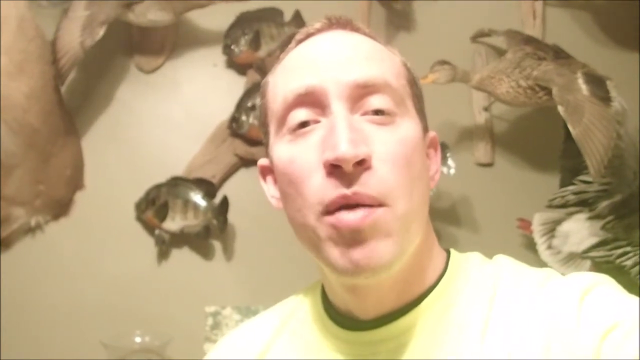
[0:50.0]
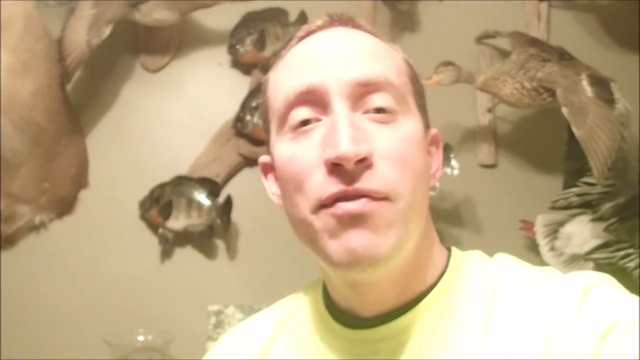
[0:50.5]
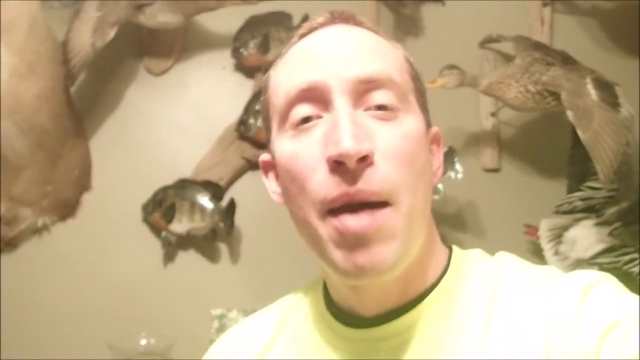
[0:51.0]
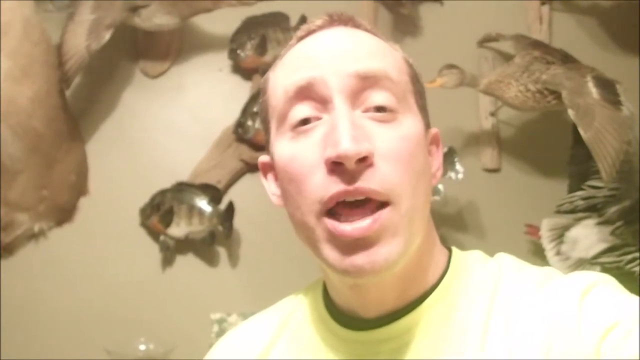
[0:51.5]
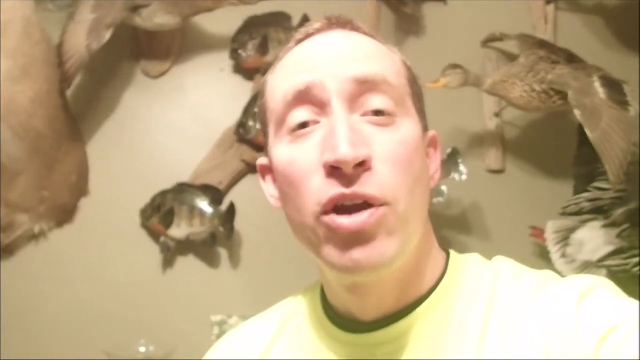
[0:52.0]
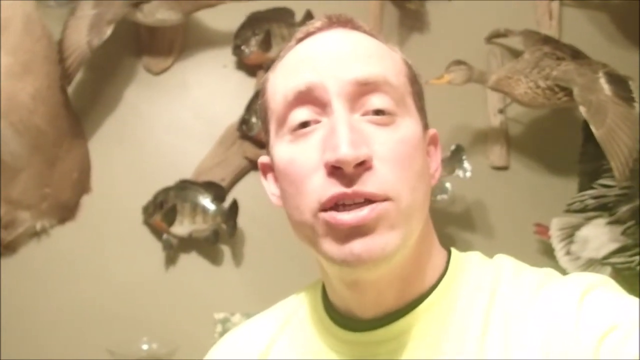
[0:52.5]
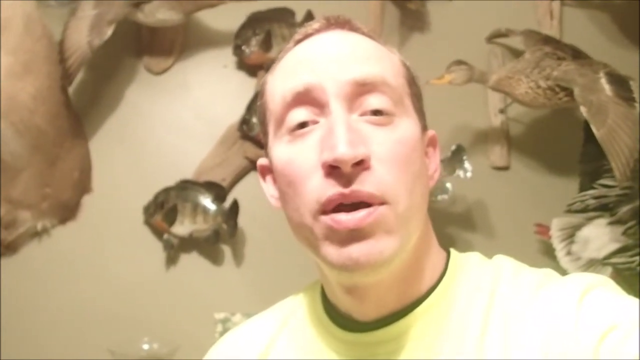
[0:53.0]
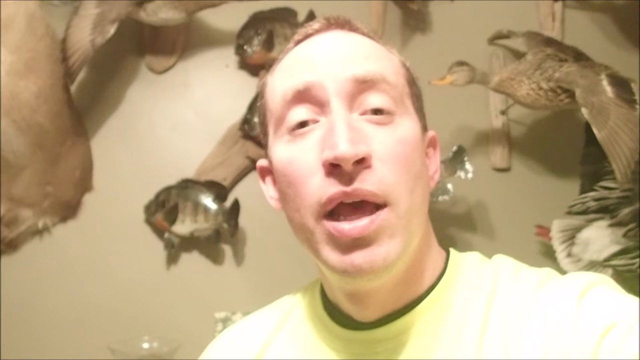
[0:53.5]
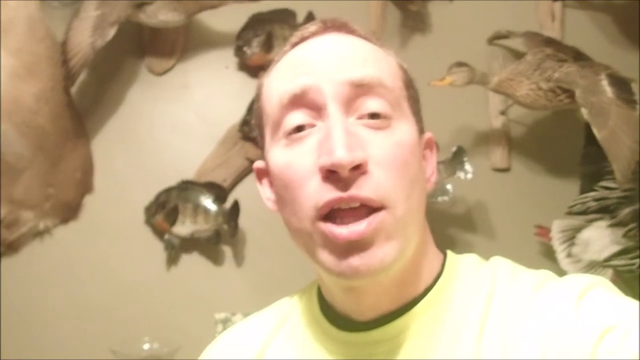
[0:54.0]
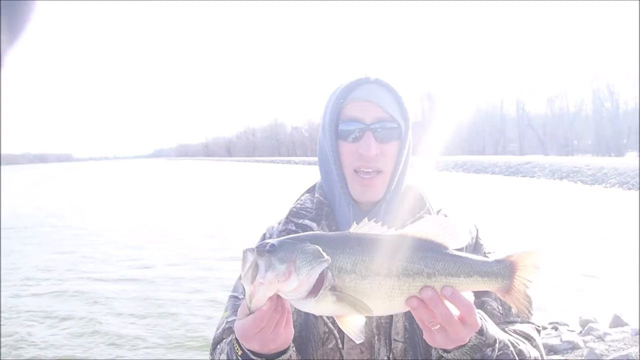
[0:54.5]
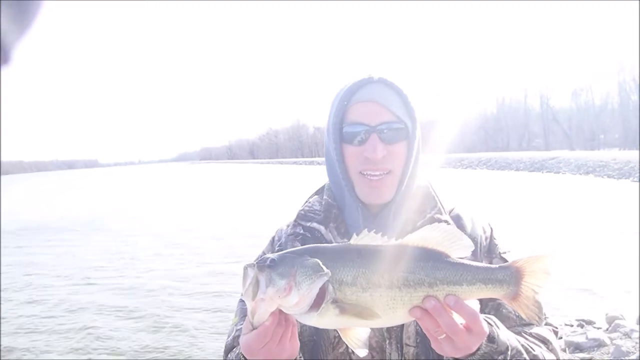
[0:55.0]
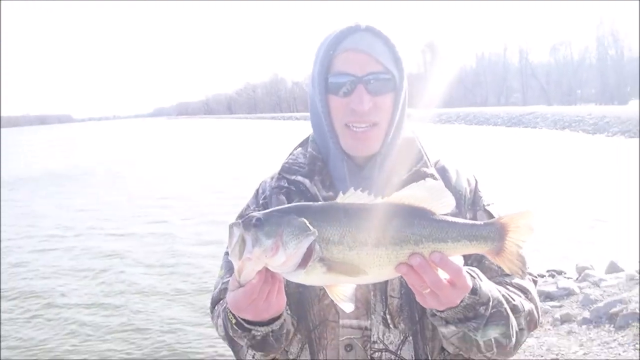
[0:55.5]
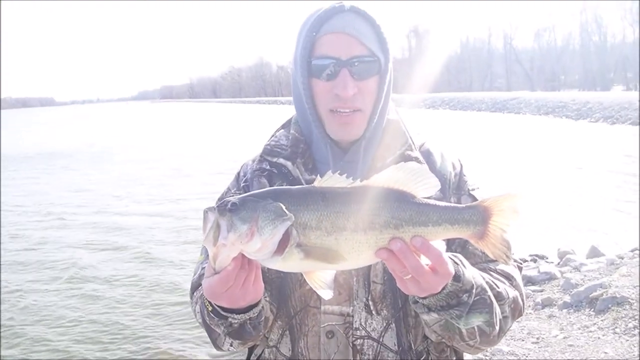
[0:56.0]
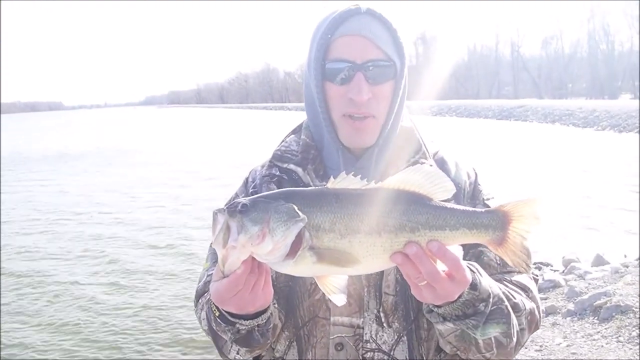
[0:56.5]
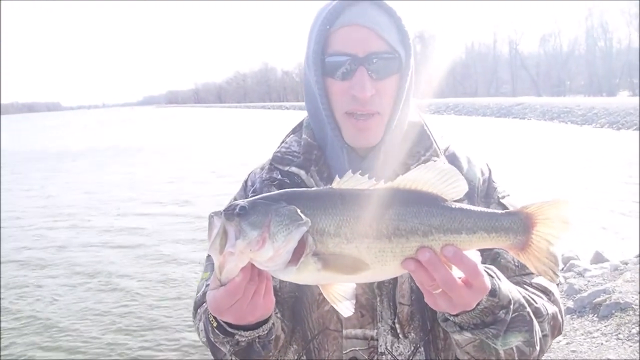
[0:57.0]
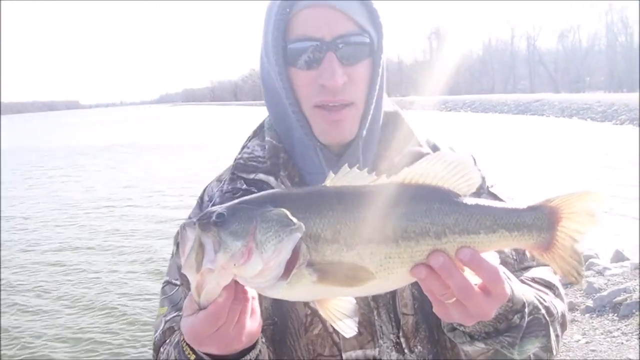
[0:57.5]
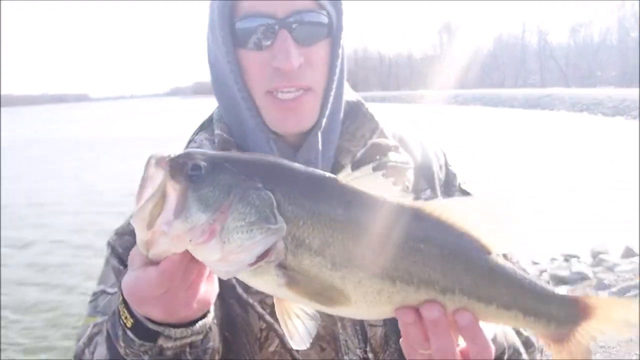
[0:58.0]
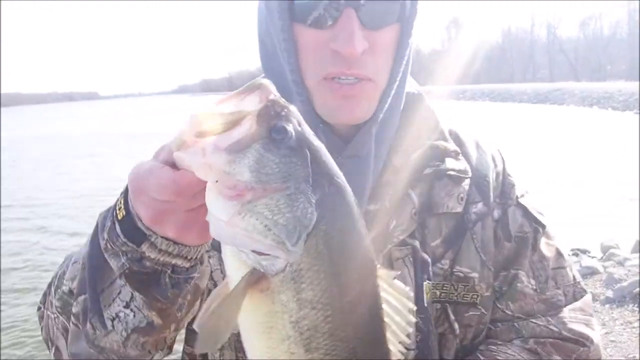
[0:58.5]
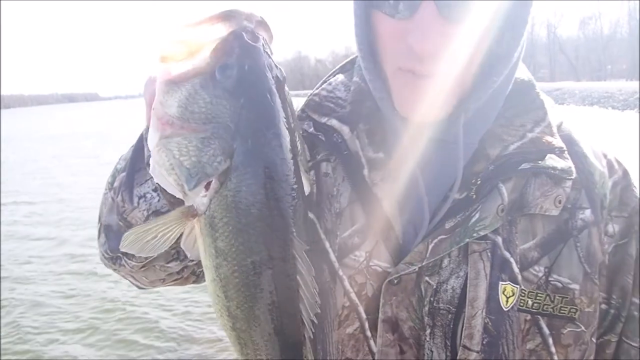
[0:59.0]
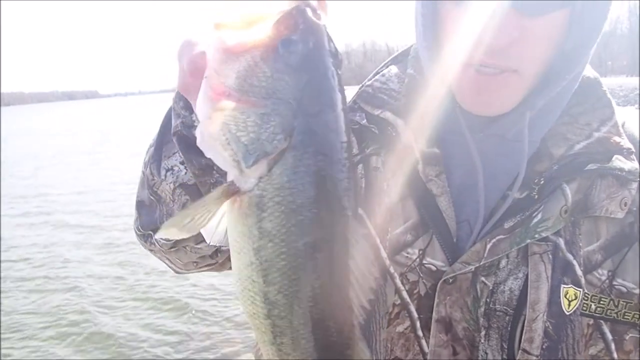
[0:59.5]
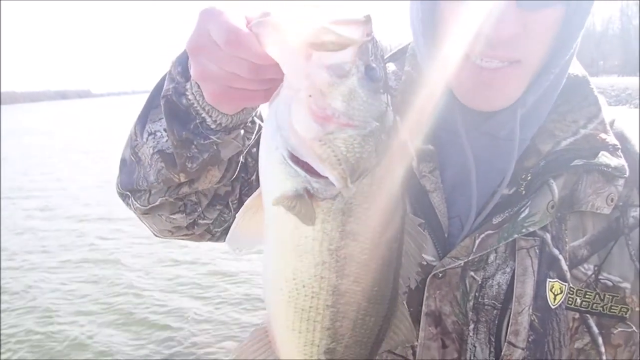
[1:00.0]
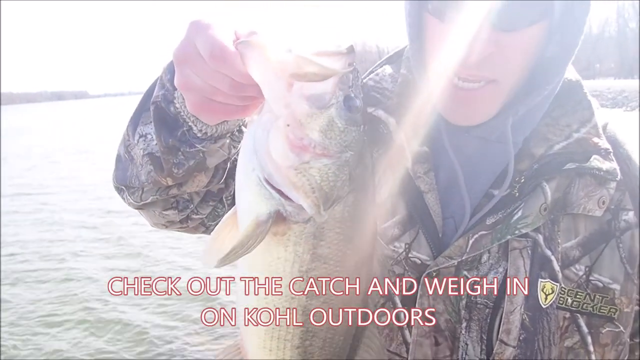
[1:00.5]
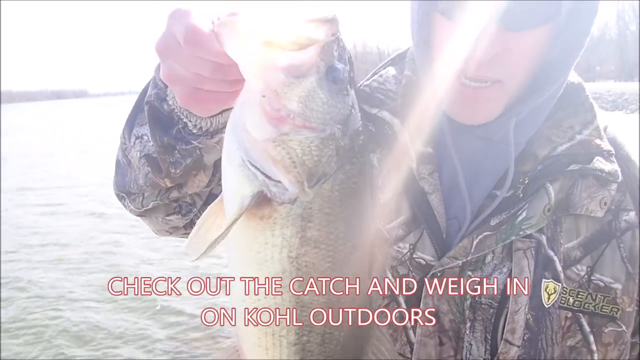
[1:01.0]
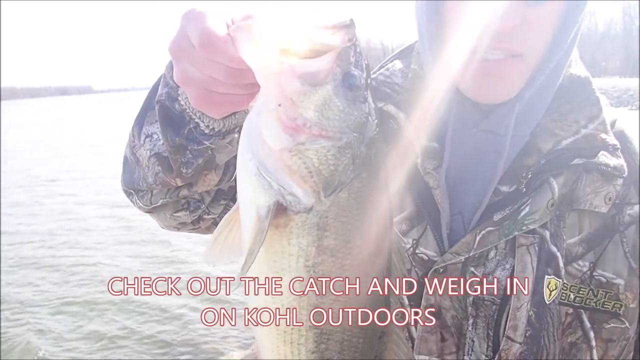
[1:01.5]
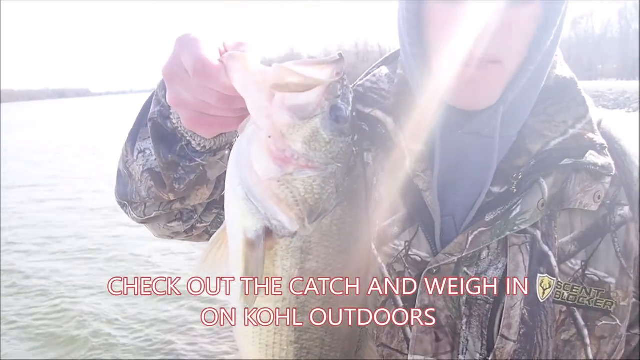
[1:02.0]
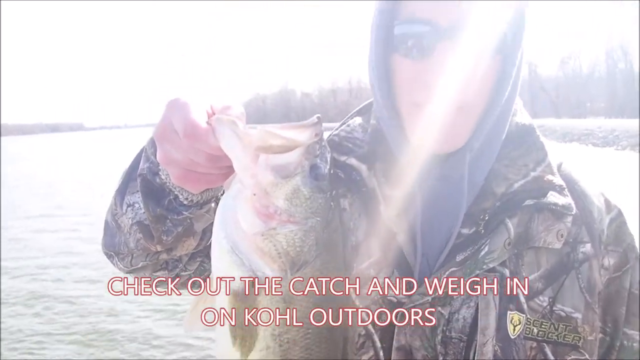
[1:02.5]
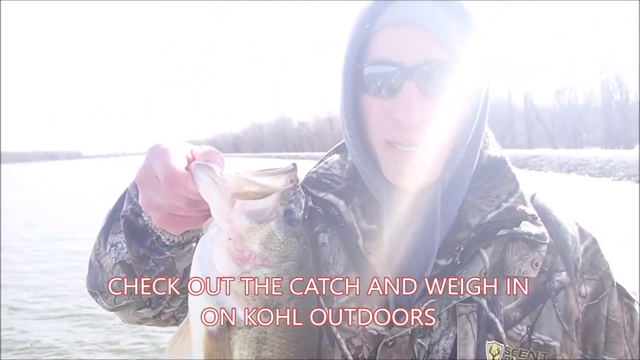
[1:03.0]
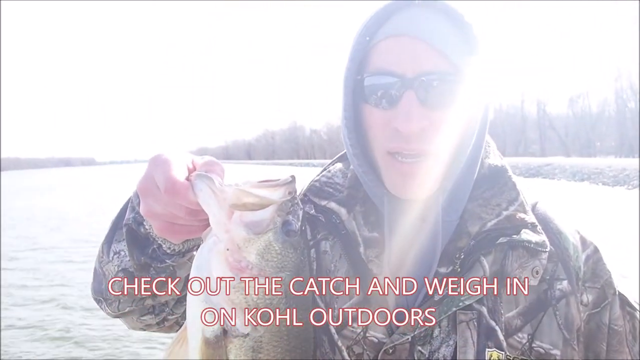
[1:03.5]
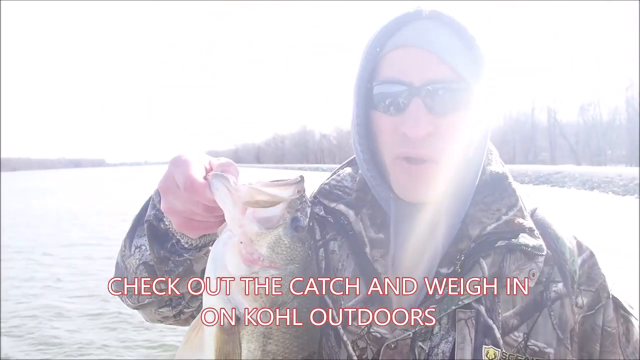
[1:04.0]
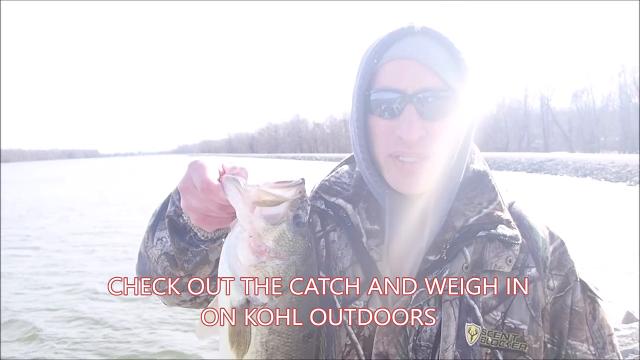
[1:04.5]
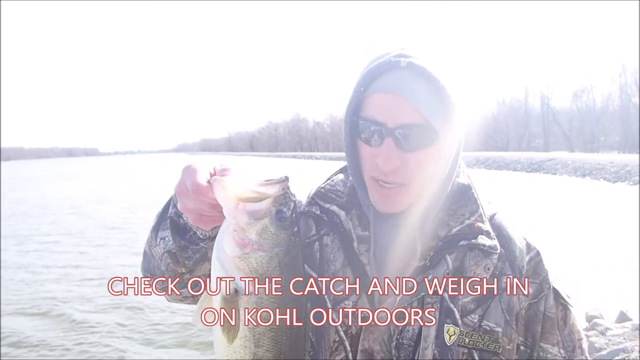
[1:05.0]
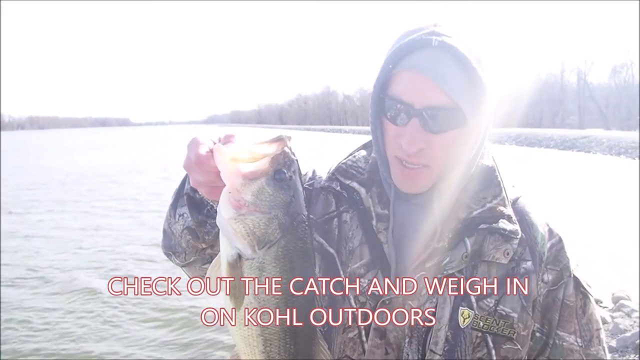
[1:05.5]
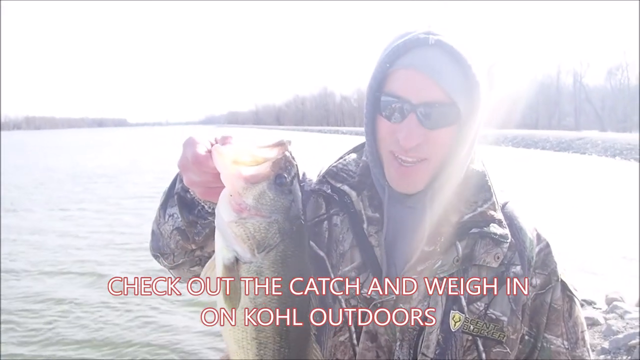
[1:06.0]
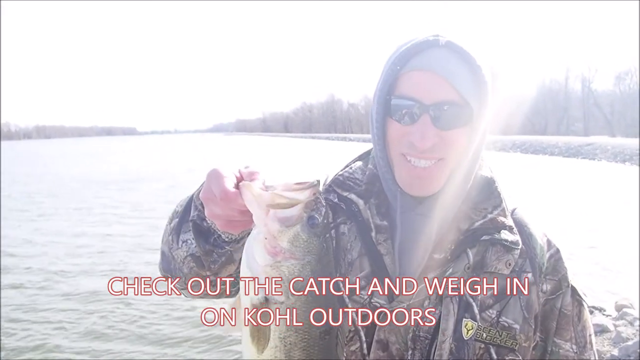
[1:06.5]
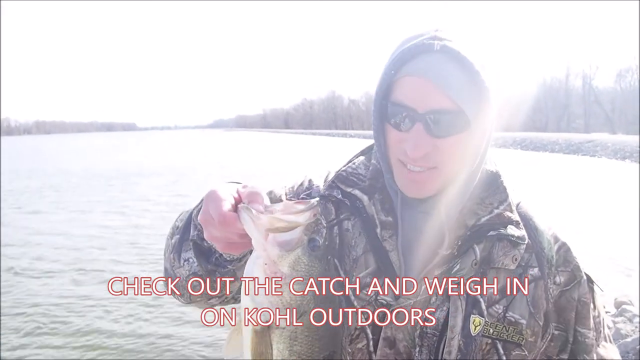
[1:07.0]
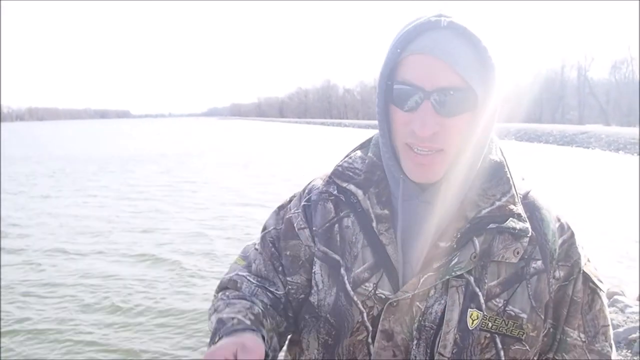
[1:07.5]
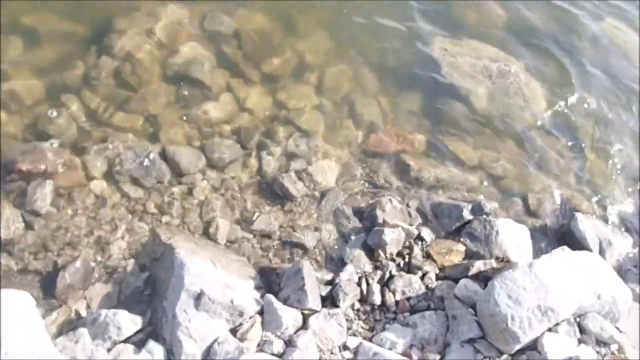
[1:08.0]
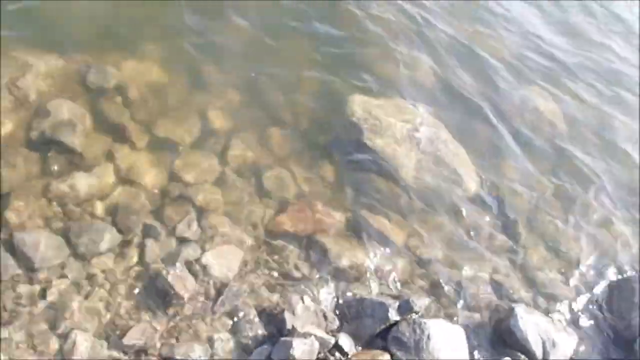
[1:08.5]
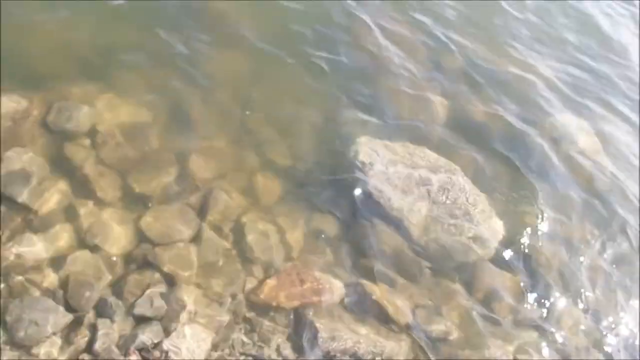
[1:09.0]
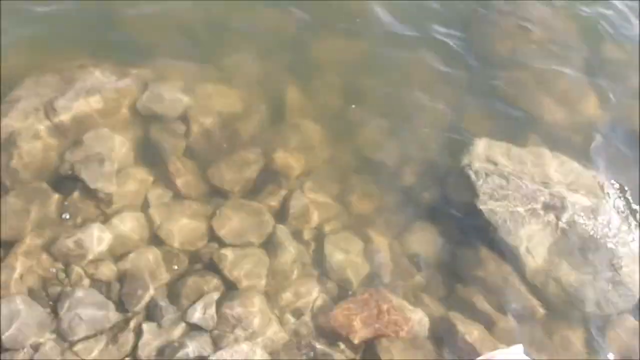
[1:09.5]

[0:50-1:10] The person talks while facing the camera. Another shot then shows him at the sea, holding some sort of fish.